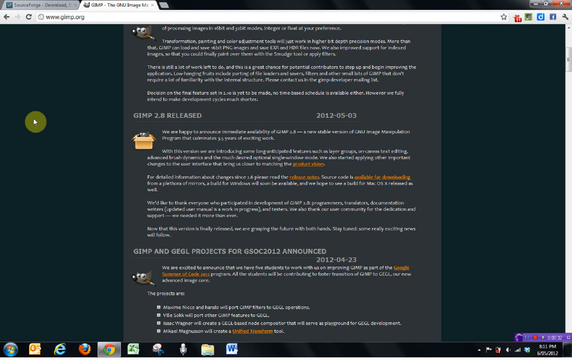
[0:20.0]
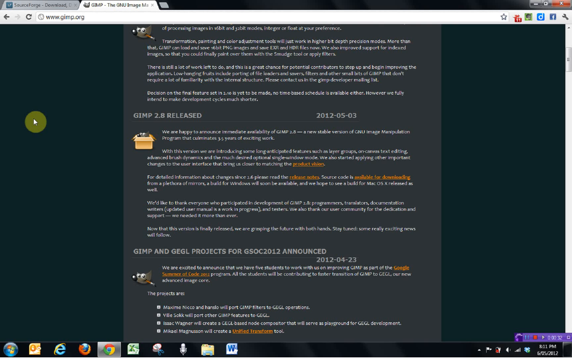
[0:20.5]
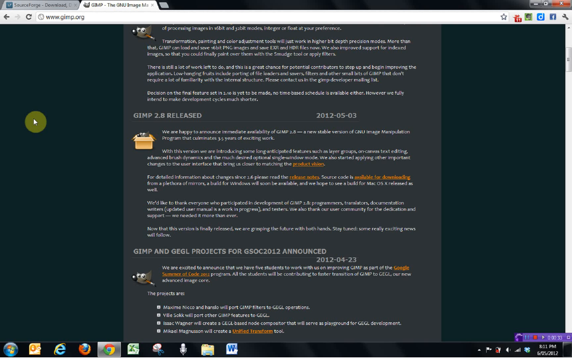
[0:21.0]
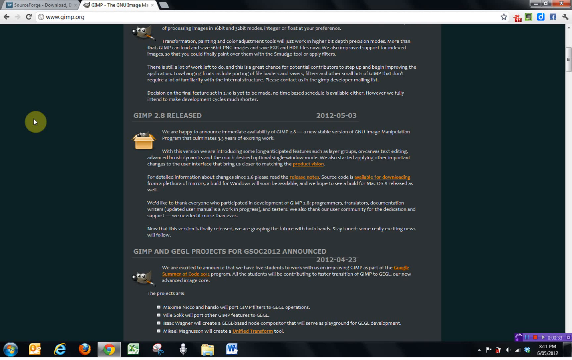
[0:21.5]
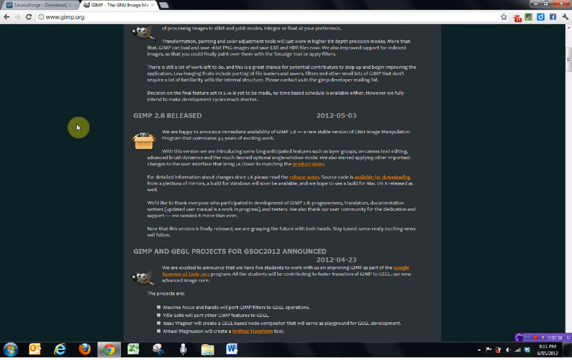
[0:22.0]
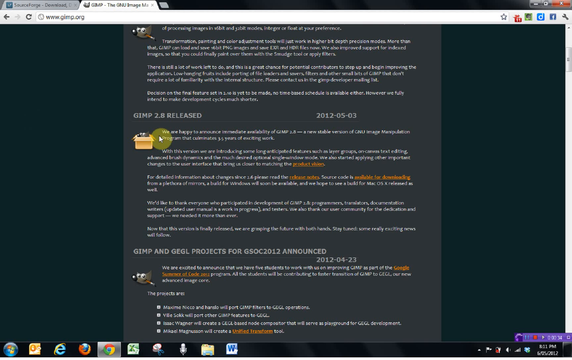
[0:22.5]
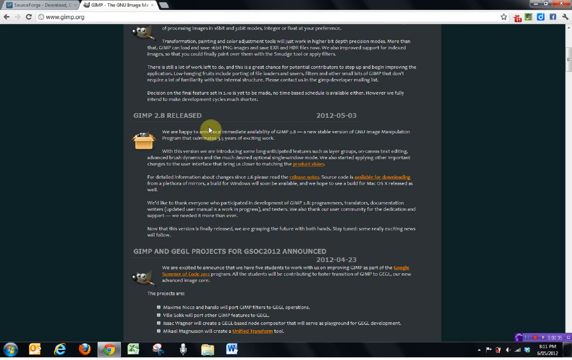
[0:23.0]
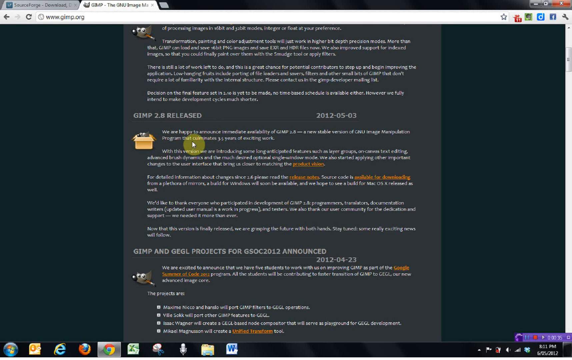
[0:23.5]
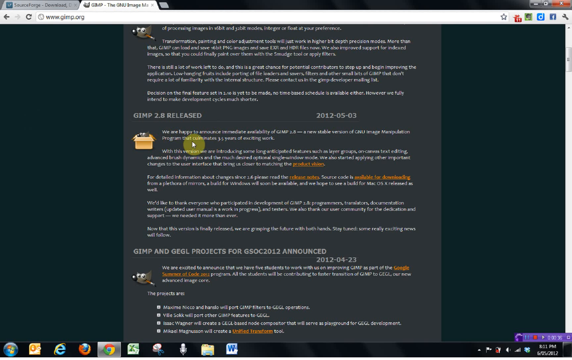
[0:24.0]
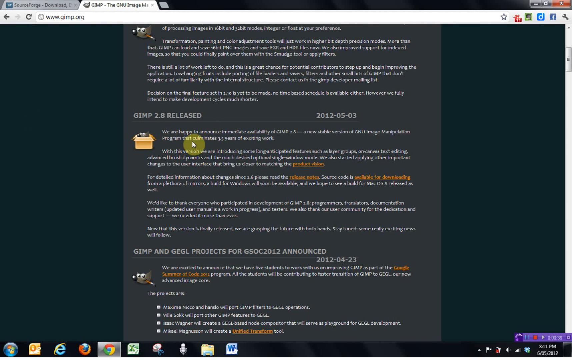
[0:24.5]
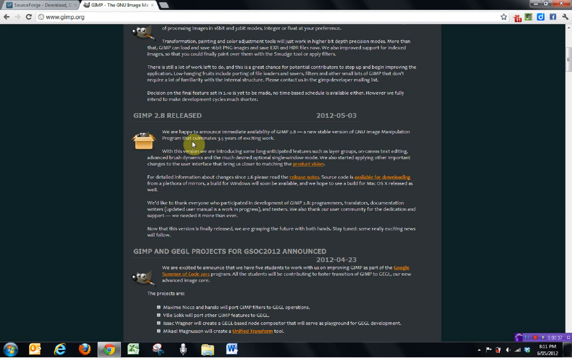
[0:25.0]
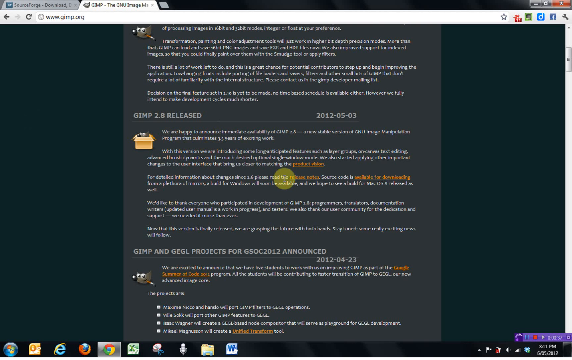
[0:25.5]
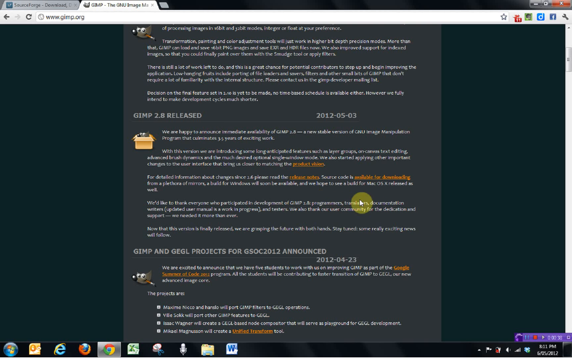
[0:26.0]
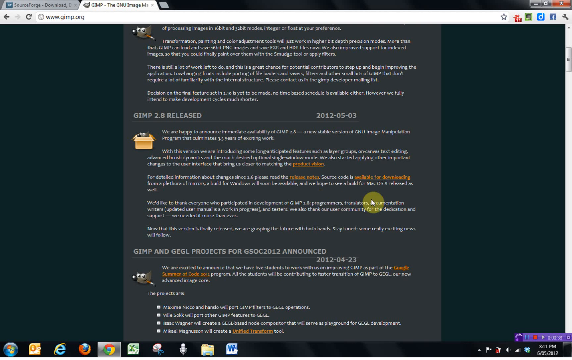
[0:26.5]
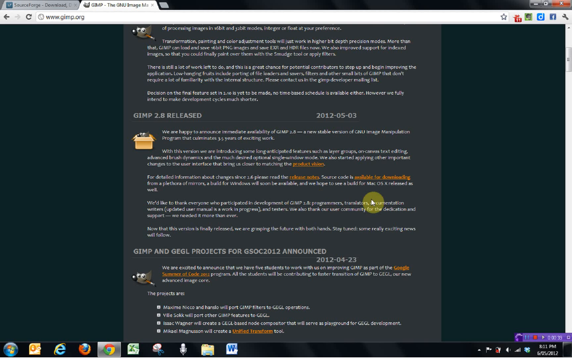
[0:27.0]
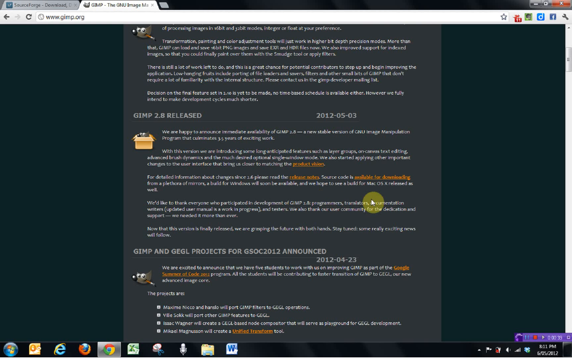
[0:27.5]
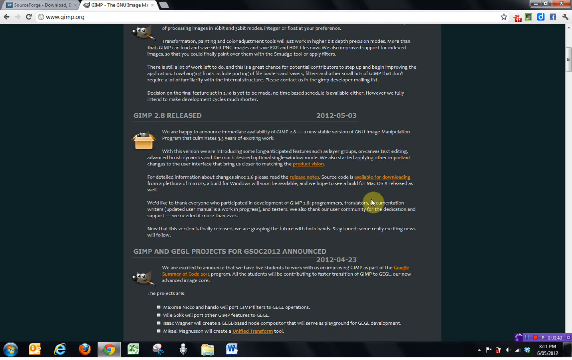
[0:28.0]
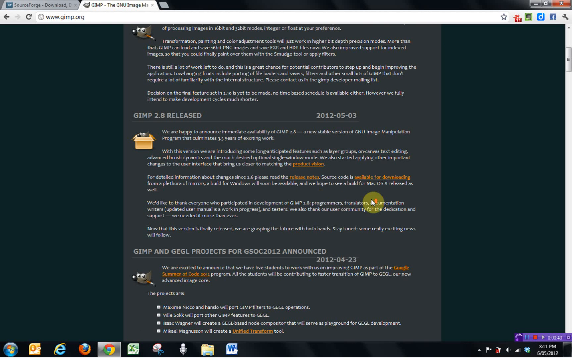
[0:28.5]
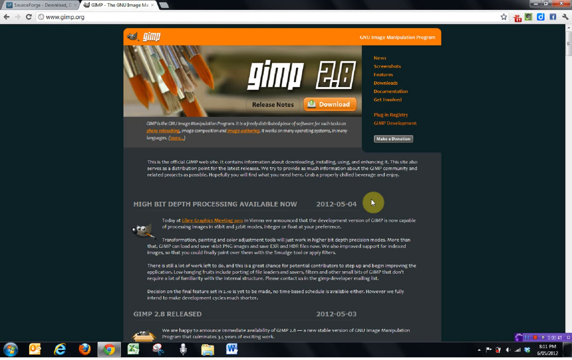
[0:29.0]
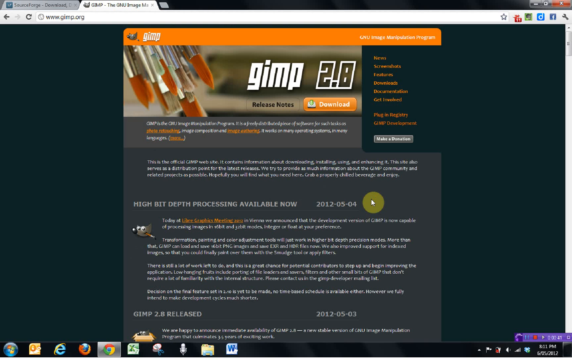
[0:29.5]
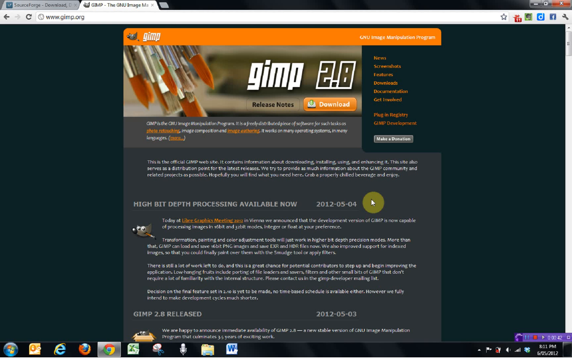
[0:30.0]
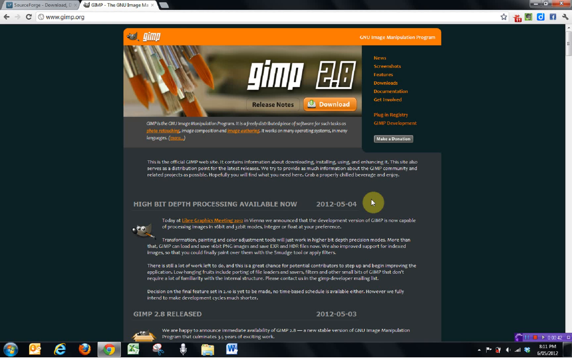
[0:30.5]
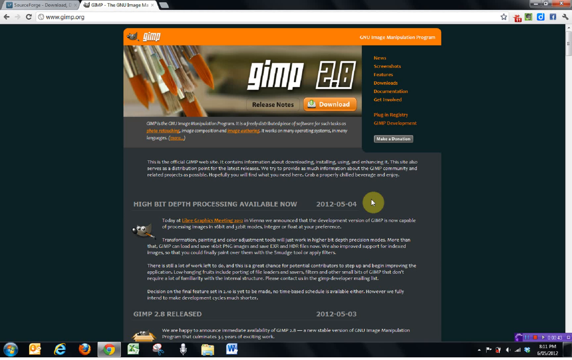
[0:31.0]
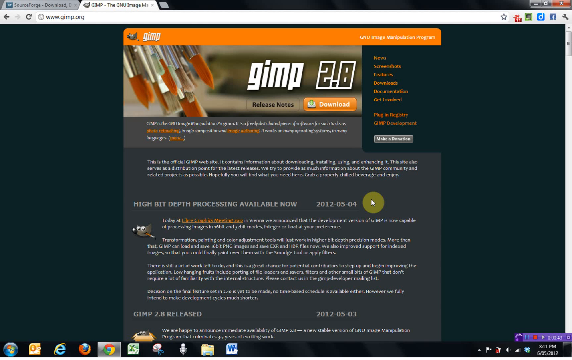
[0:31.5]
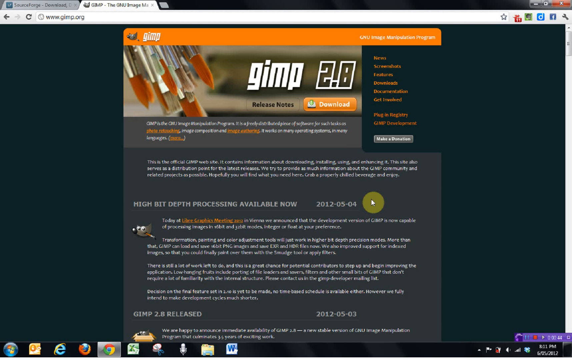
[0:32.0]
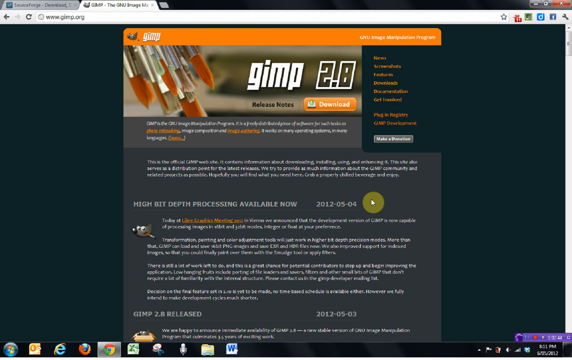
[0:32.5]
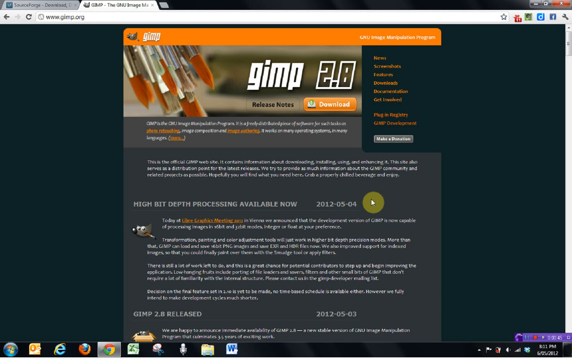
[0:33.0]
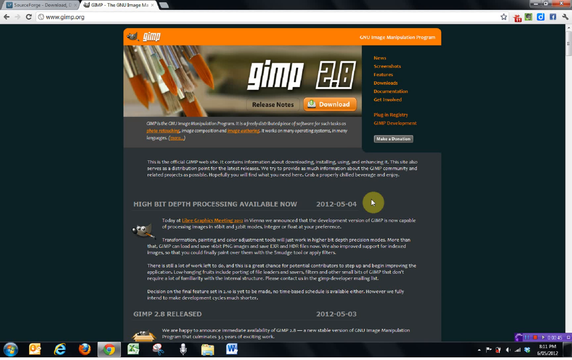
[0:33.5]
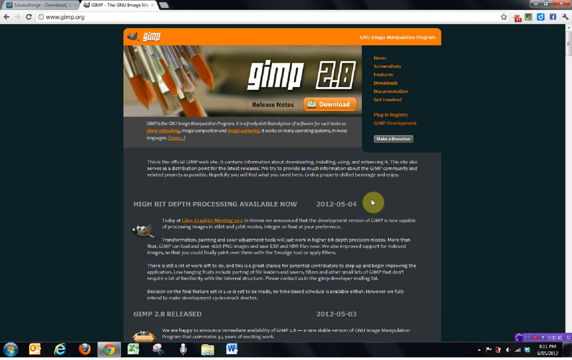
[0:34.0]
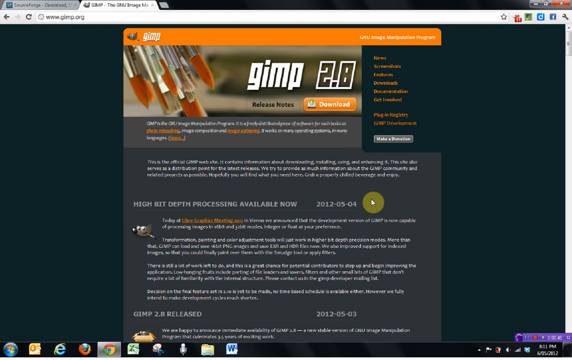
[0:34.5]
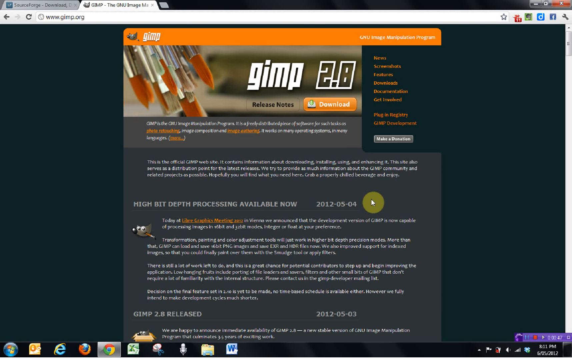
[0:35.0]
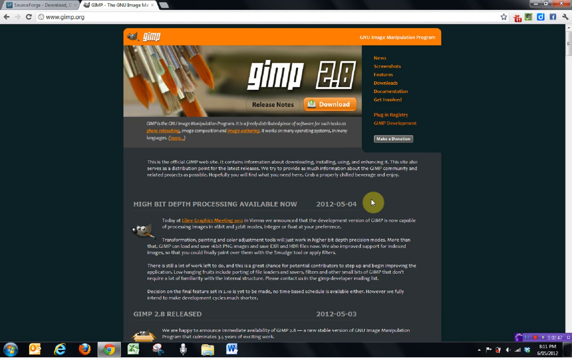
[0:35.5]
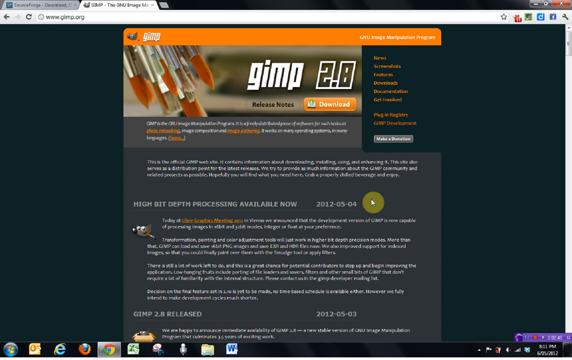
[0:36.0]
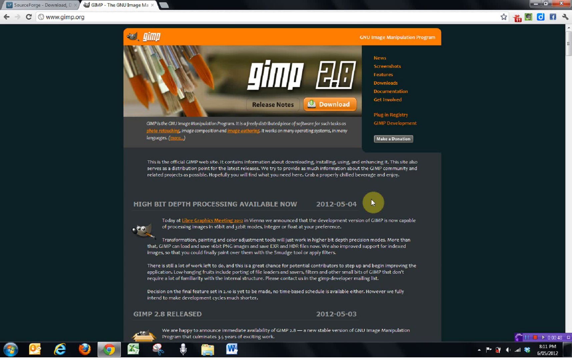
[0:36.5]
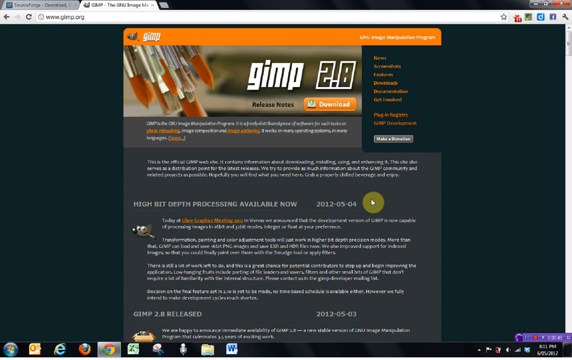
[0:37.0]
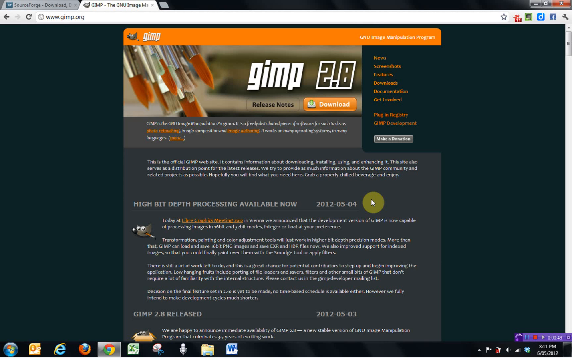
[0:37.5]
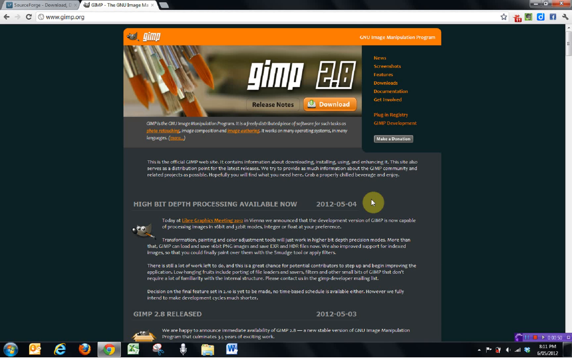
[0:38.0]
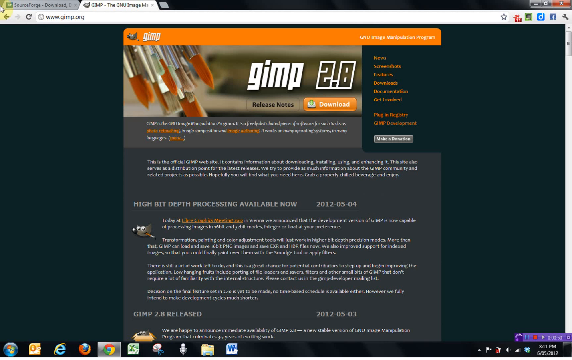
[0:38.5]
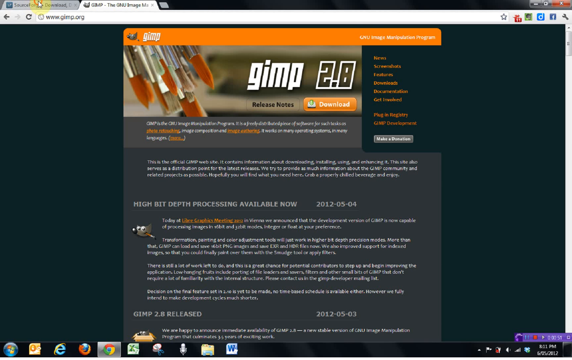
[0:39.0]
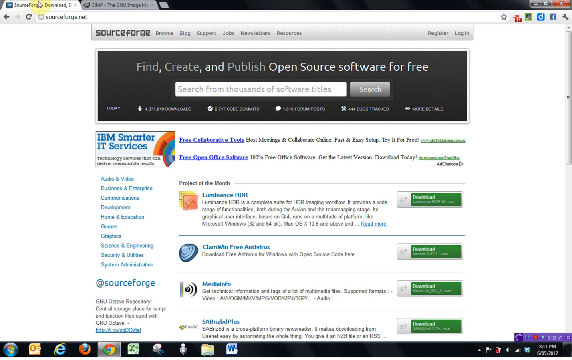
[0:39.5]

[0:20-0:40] The same screen appears, with the GIMP 2.8 release dated 5.3.2012 and the GIMP and GEGL projects for GSOC 2012 announcement. A pointer that looks like a highlight moves around a little, and the view apparently scrolls up on the same page. At the top is a graphic, "GIMP 2.8 release notes", and a download button; the only other legible text is "high bit depth processing available now" with the date 5.4.2012. The page stays the same for a while, then quickly clicks to another screen that stays up for only a few seconds.